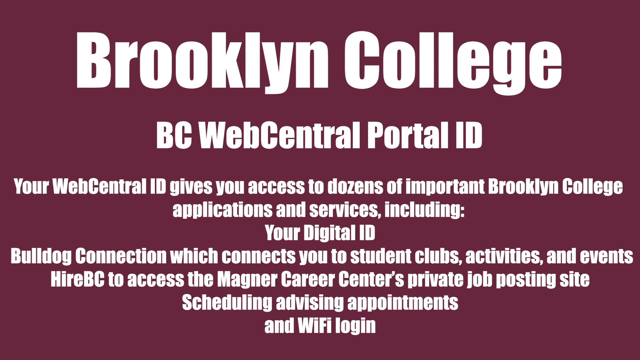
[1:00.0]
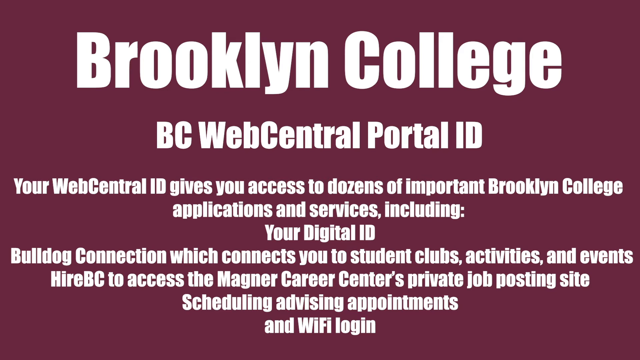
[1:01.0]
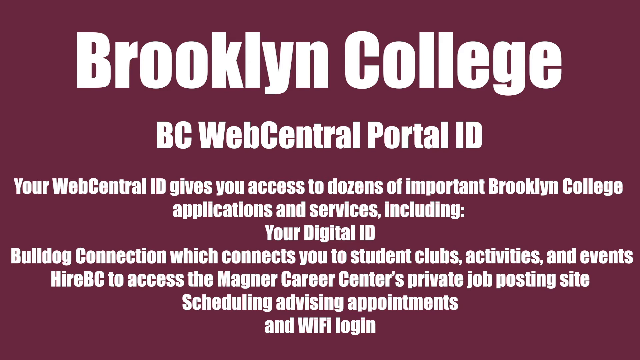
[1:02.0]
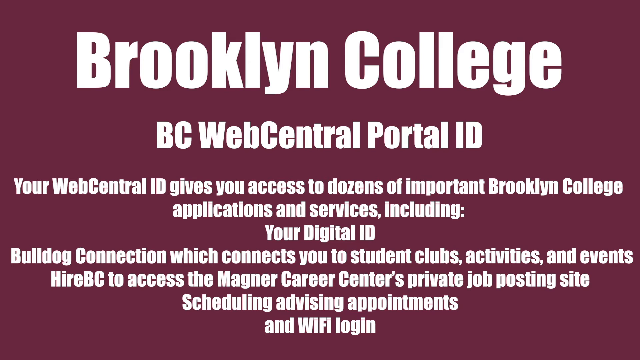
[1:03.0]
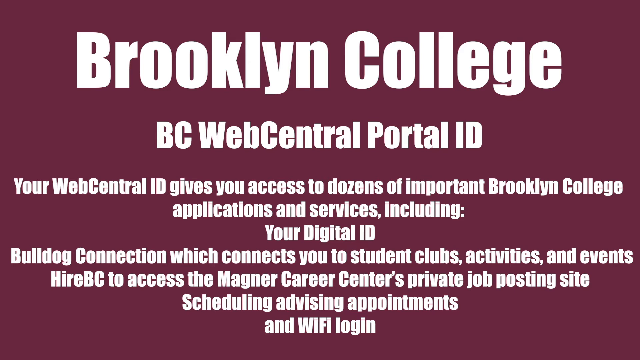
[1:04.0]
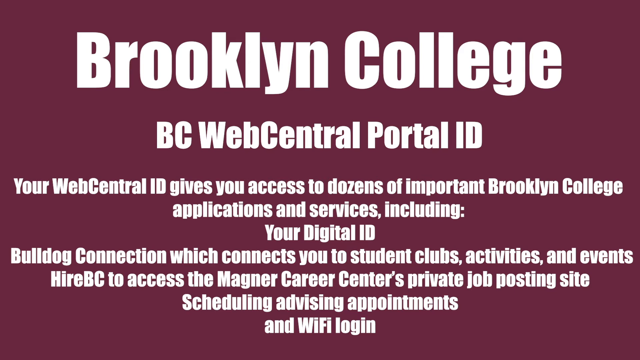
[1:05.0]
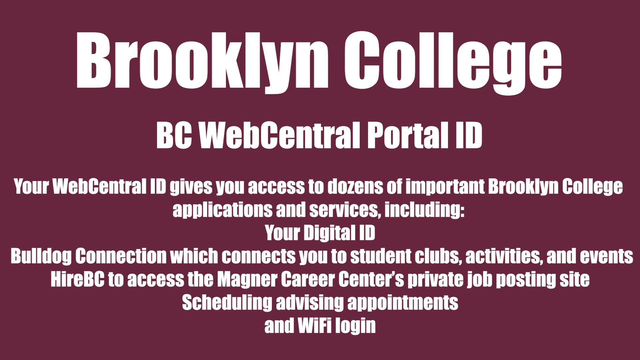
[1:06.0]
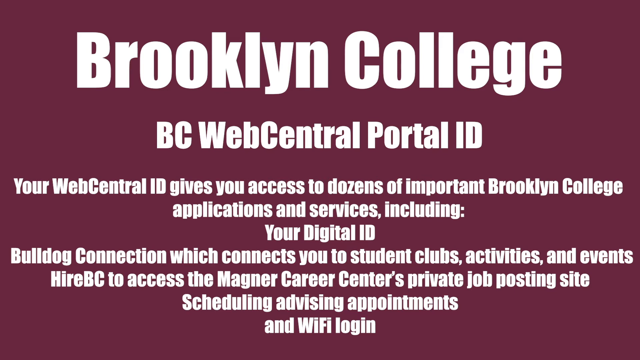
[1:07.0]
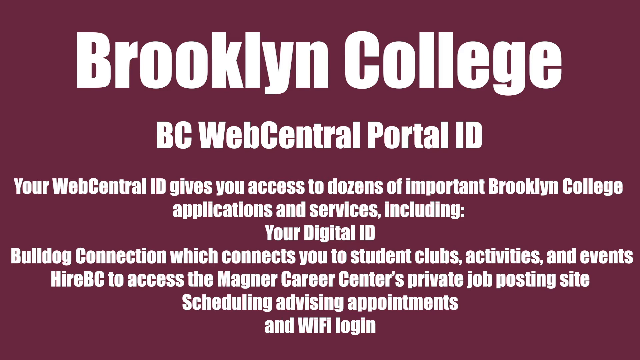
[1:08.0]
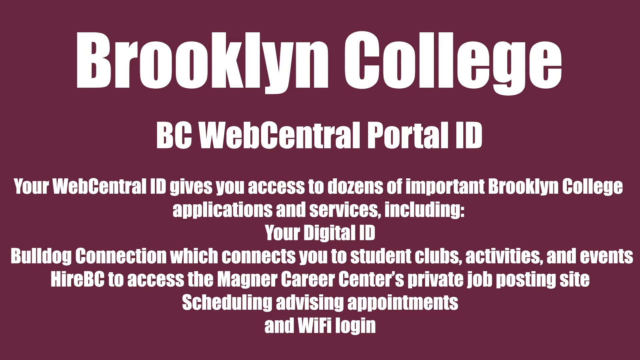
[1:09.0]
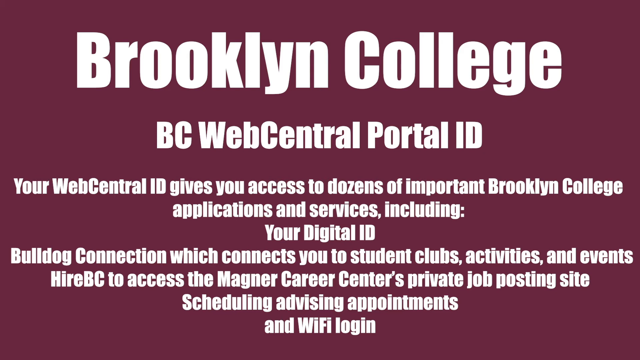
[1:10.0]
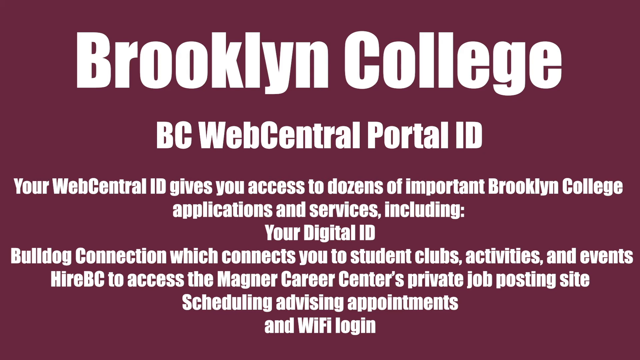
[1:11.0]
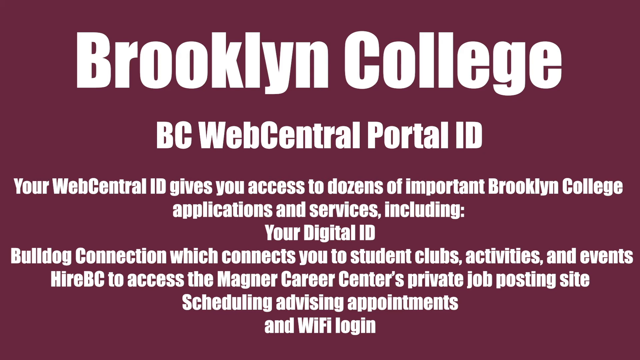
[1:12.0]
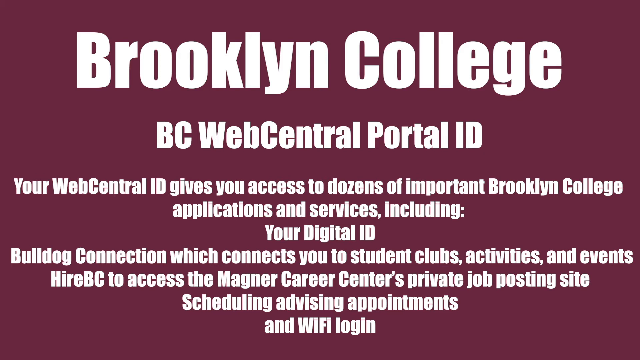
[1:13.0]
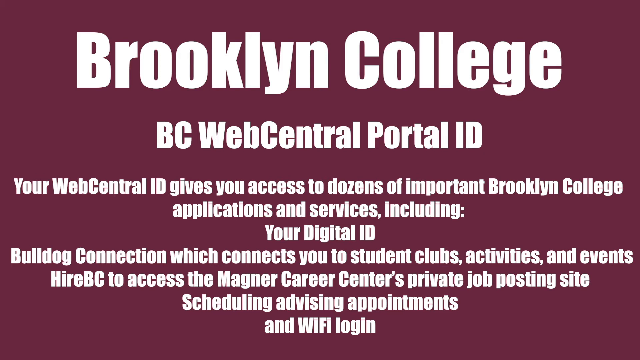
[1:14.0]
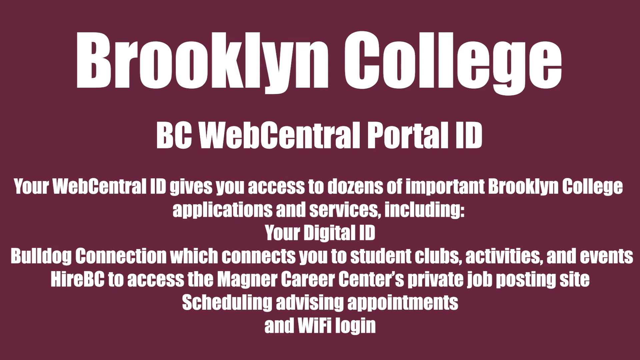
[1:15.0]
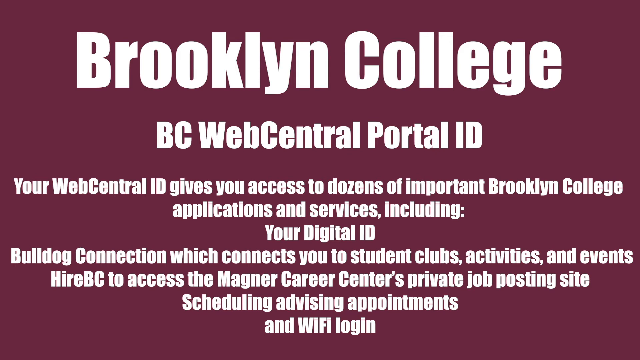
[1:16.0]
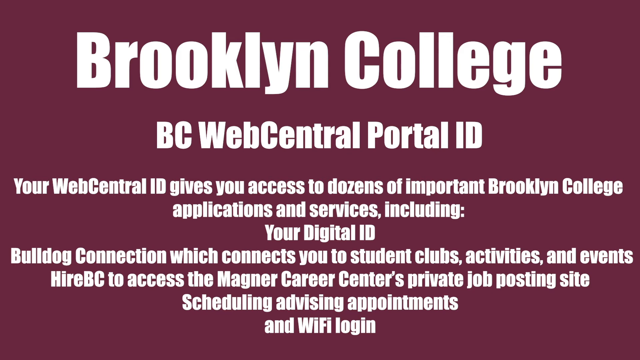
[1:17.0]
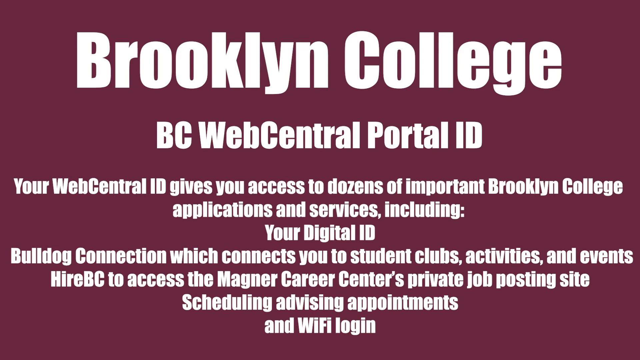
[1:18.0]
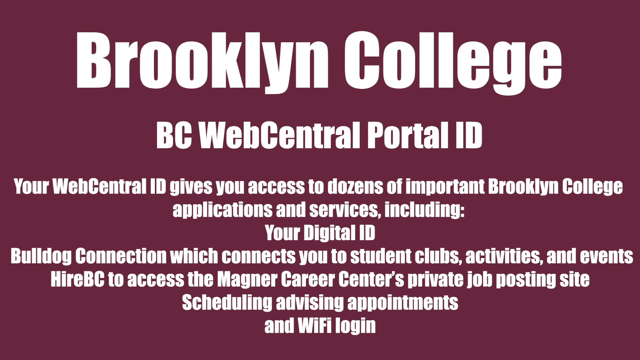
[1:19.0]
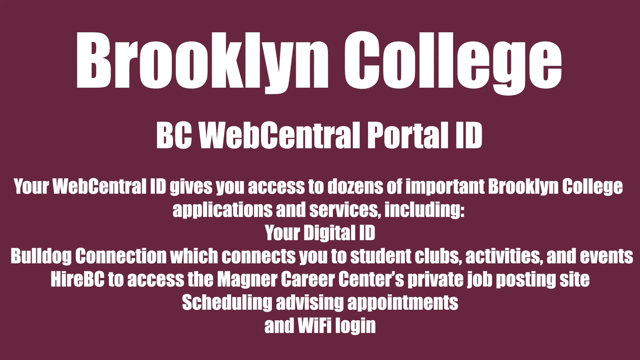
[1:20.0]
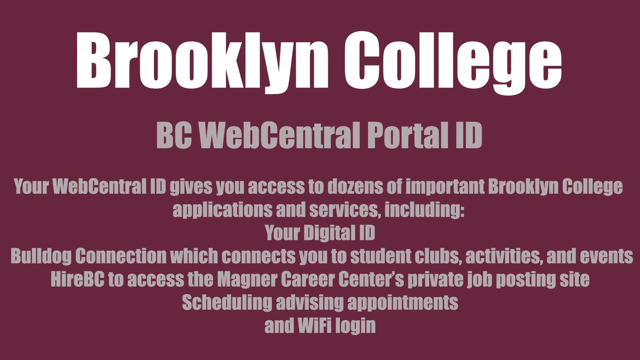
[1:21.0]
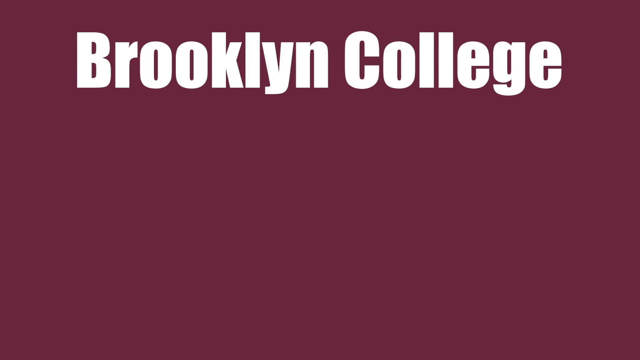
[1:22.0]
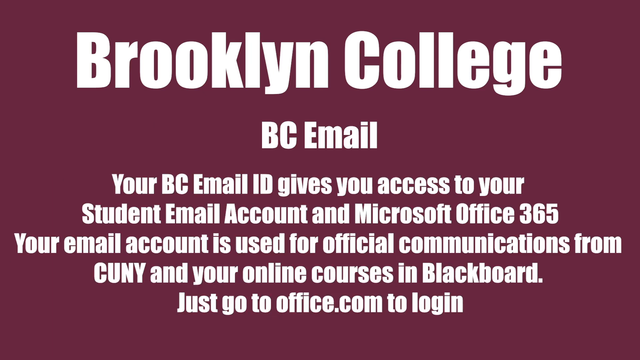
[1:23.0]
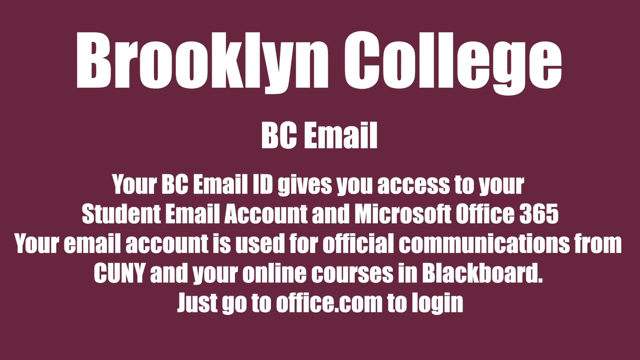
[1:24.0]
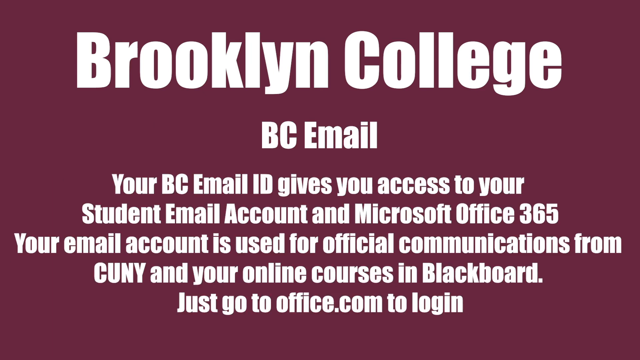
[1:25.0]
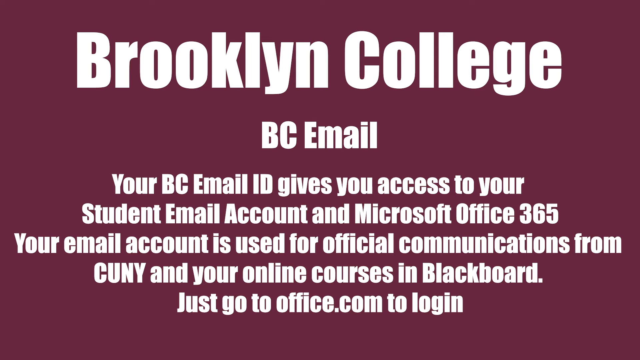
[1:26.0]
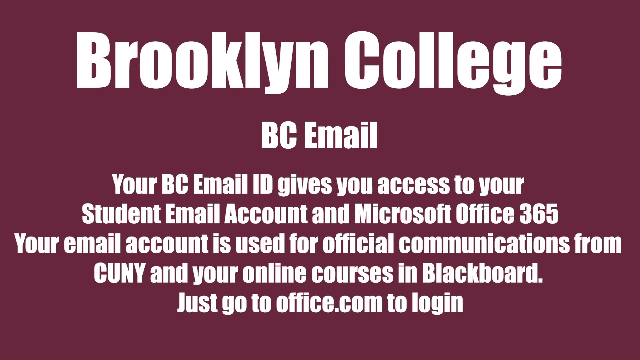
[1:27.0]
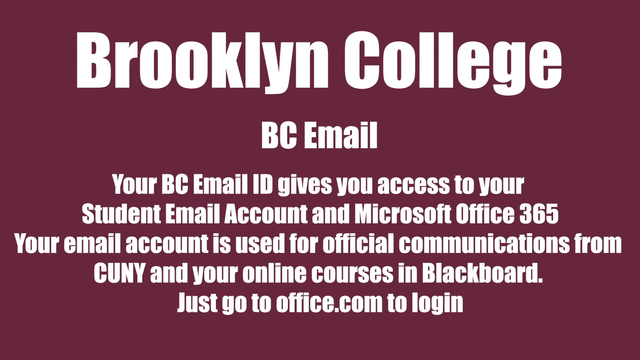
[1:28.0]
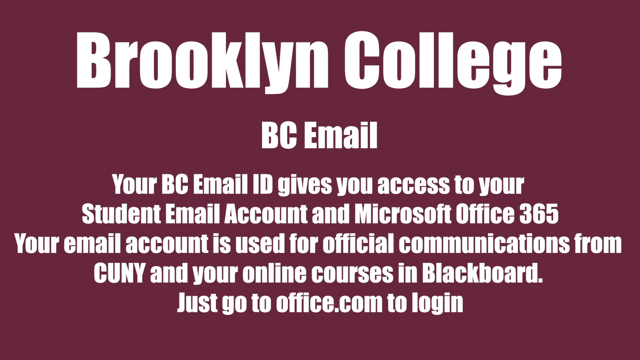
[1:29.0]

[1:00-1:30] The Brooklyn College ad continues with the Web Central Portal ID section, listing access to "Magner Career Center's private job posting site, scheduling advising appointments, and Wi-Fi login," which ends that section. The ad then moves to the next part, titled "BC Email," which says "Your BC Email ID gives you access to your student email account at Microsoft Office 365. Your email account is used for official communications from CUNY, and your online courses in Blackboard. Just go to office.com to log in." The video seems to be partly instructional, showing how to use the service.